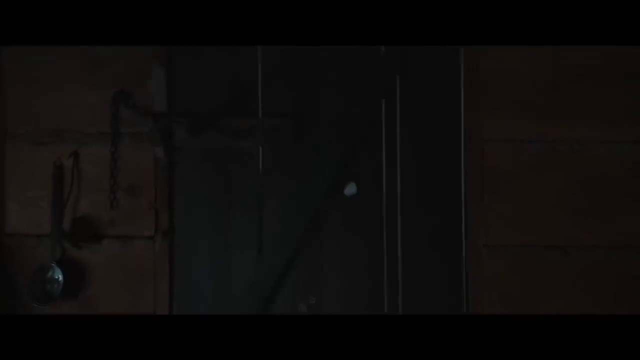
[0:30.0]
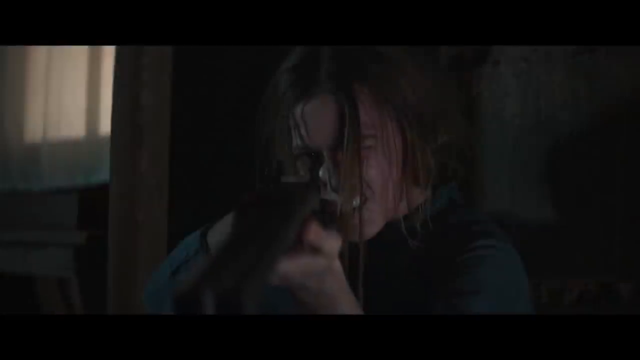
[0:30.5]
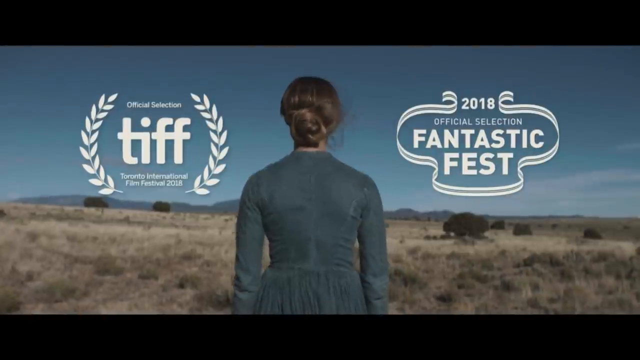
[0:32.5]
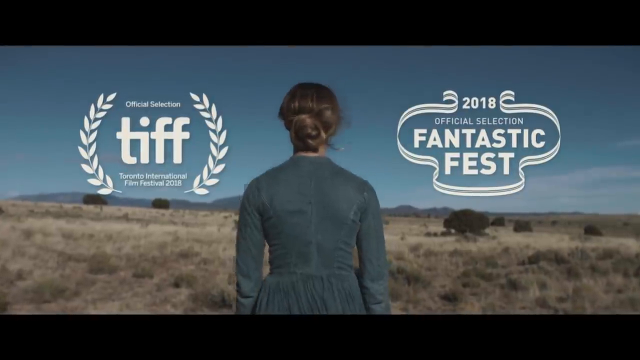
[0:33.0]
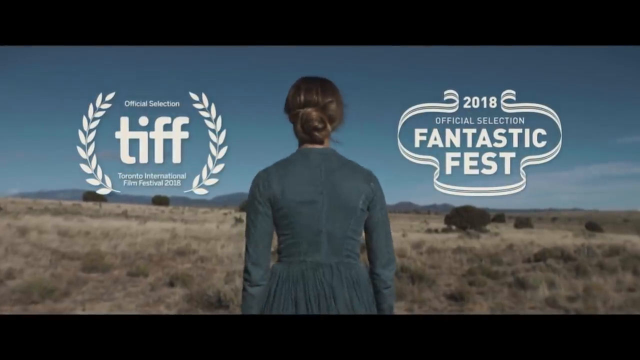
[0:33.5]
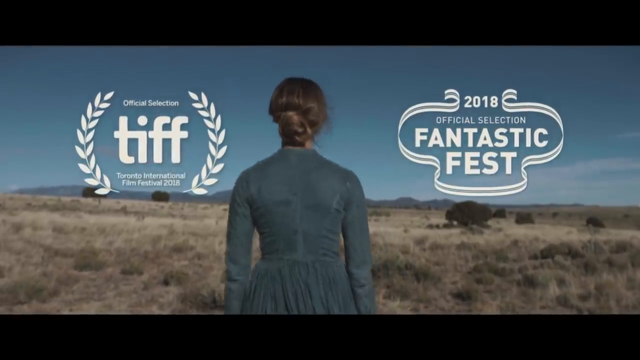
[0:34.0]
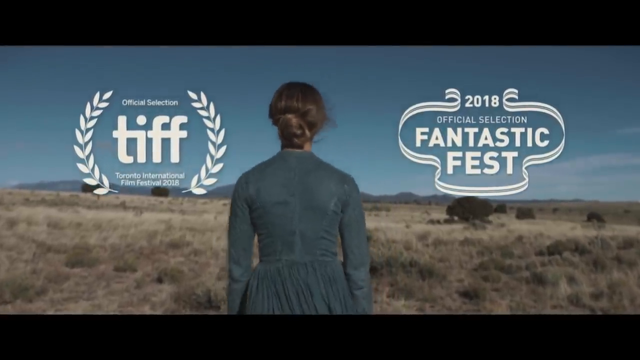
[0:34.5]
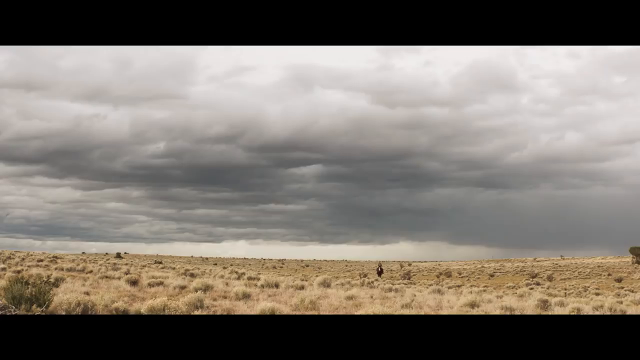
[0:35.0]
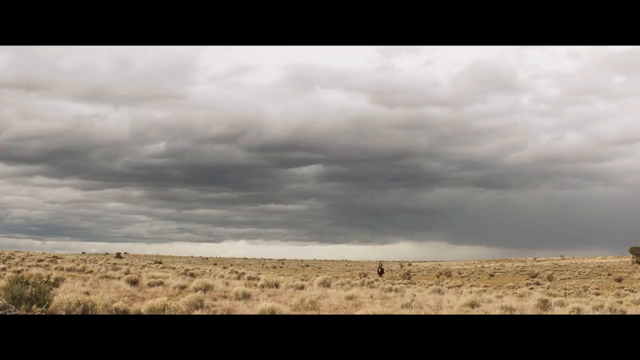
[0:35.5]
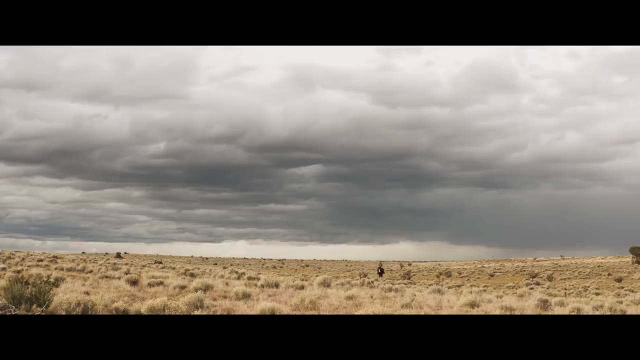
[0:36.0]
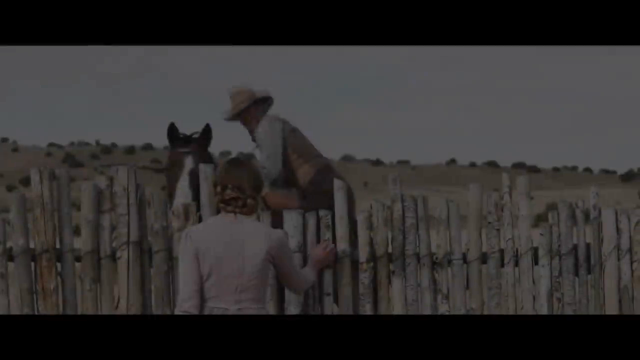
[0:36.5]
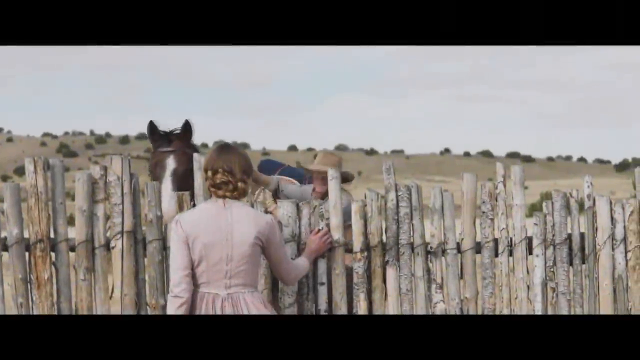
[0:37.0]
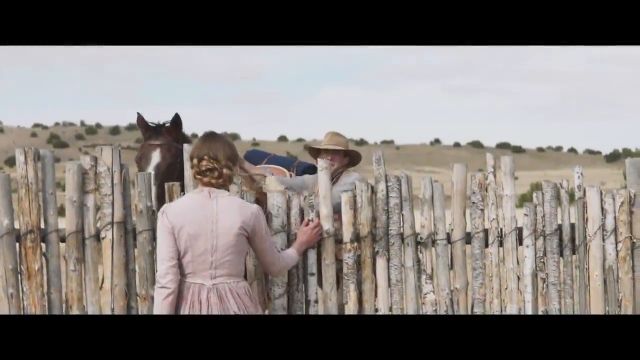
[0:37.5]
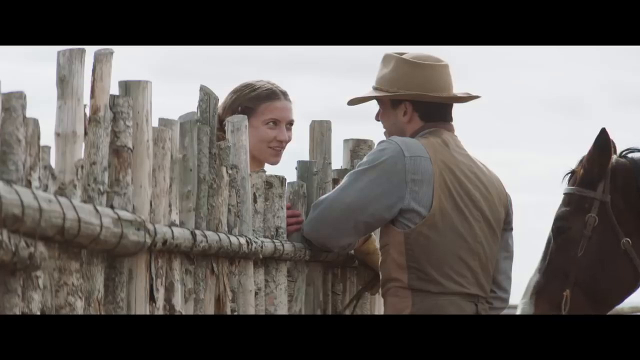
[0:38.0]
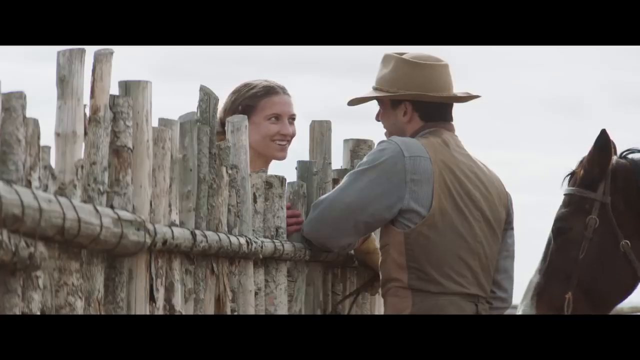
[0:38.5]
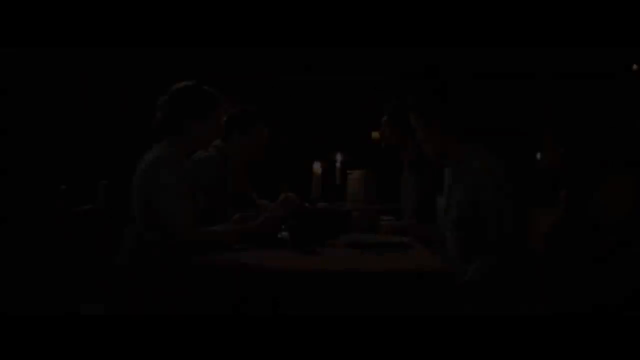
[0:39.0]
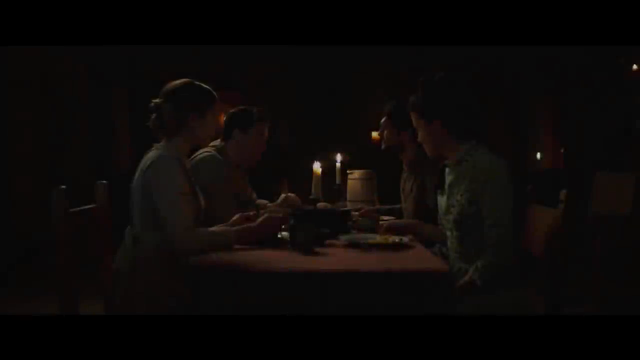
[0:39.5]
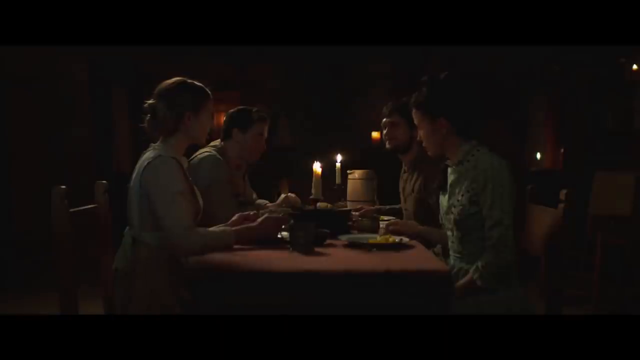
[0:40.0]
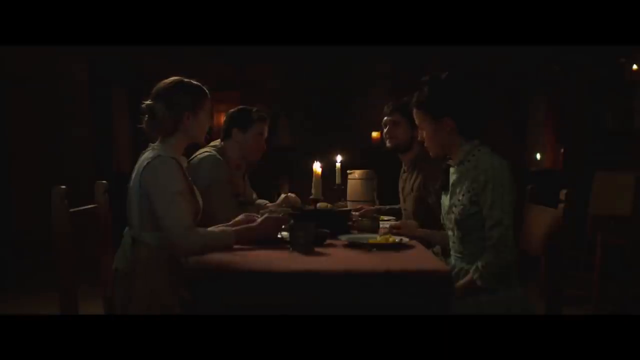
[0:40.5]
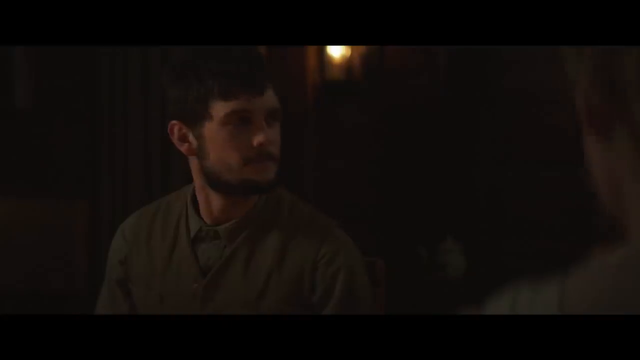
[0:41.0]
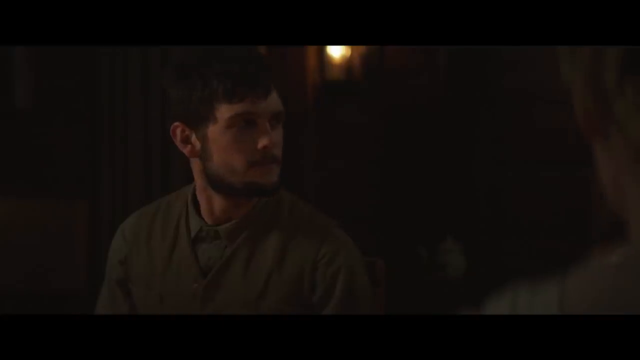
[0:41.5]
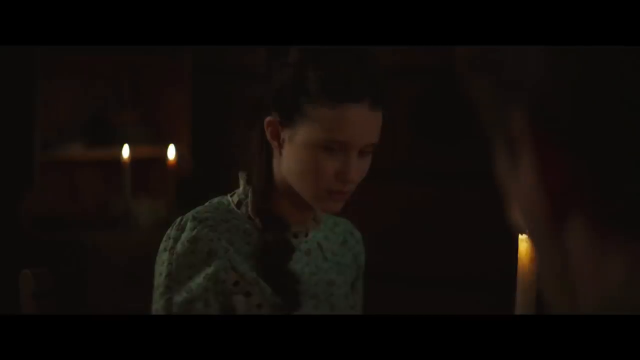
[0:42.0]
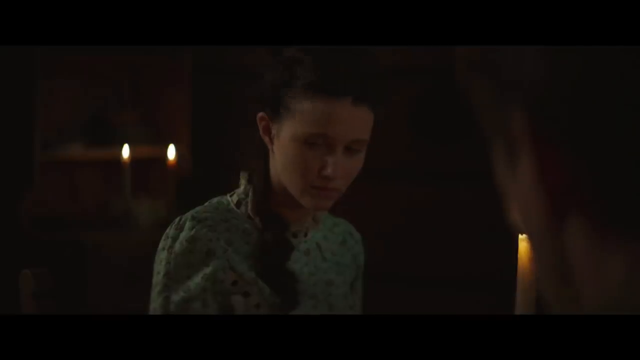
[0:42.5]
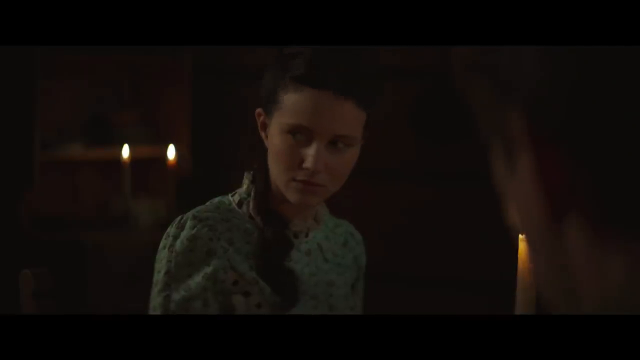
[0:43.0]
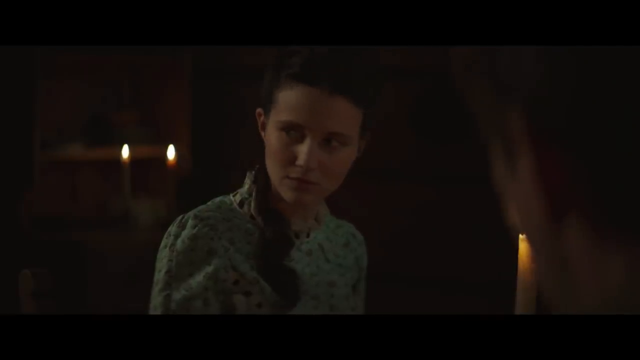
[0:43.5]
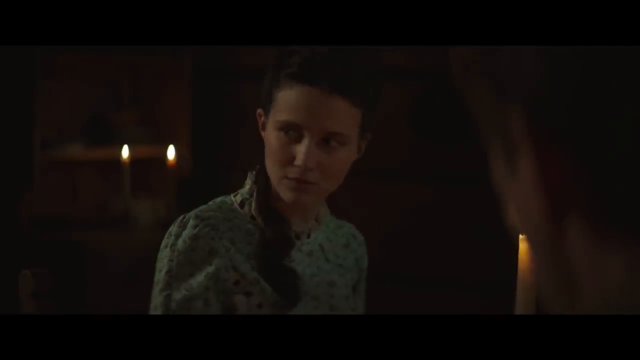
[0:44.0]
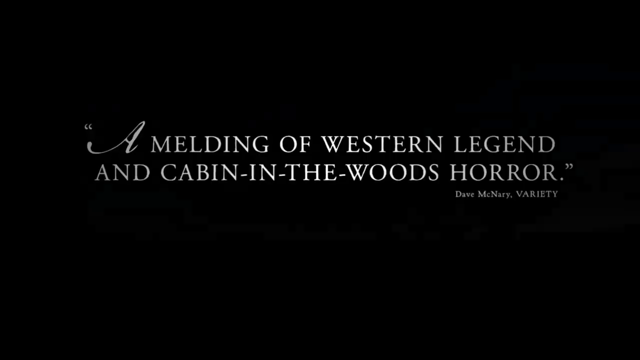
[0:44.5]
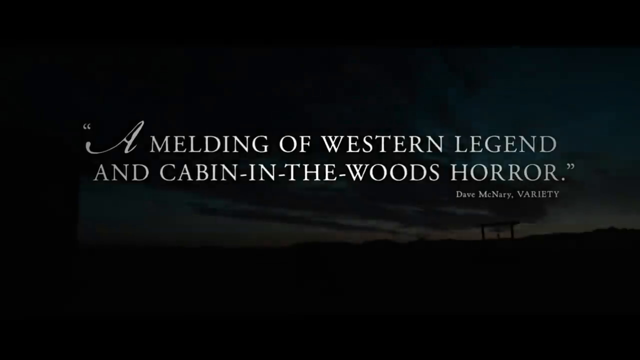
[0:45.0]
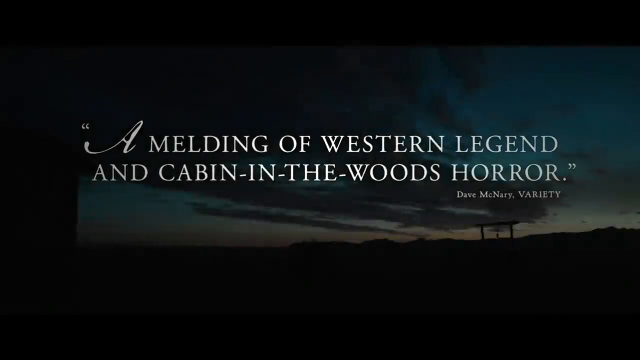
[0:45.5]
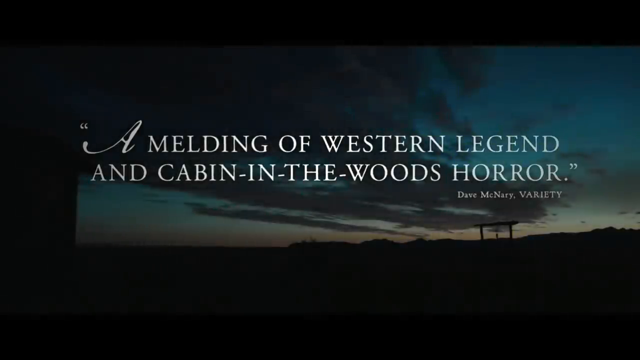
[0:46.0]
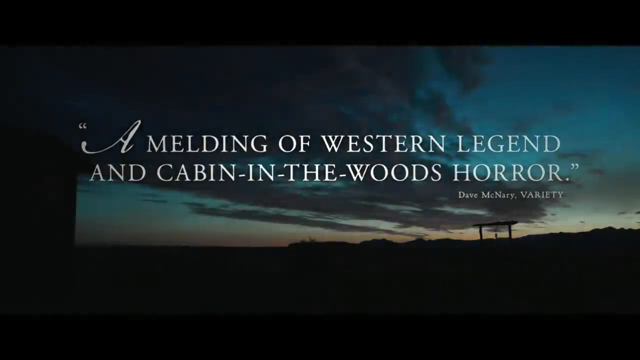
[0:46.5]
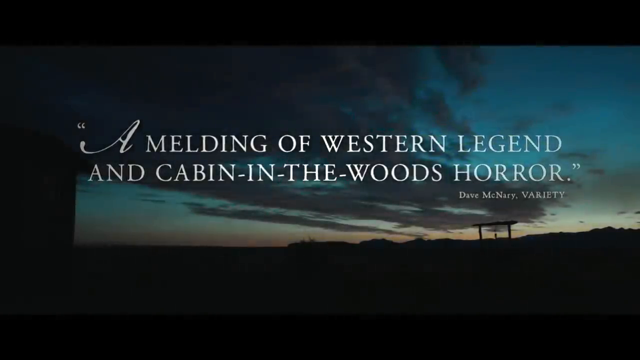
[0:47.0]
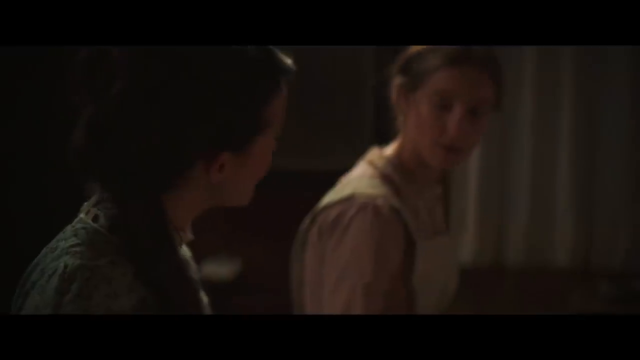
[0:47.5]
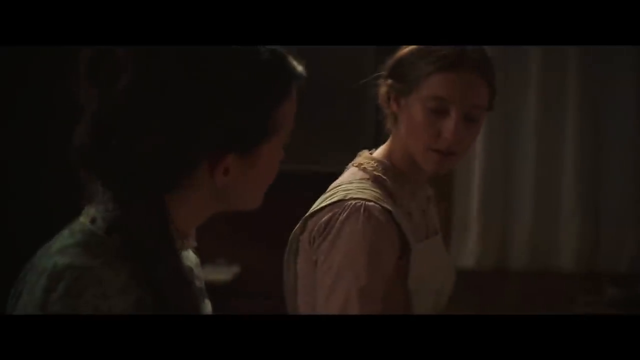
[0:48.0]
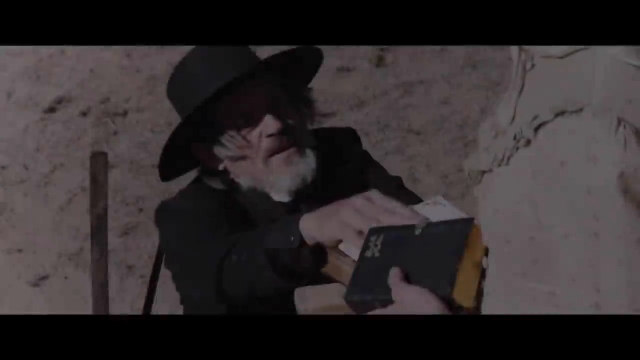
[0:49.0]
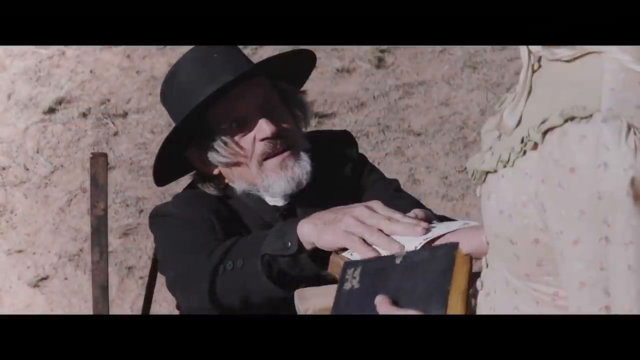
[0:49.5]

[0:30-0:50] The same young woman, in a somewhat dirty apron dress, points a gun, and it looks like the gun has gone off. She is then seen walking through the grass of a vast field in a bluish long-sleeved dress, her hair up in a bun, with hills in the far background and a blue sky with a tiny bit of cloud on the right. Text names an official selection of the Toronto International Film Festival, apparently 2018, and a 2018 official selection of Fantastic Fest. The woman continues walking, and the field is shown under a gray sky as the weather changes. She now wears what looks like a light pink or light purple dress and stands at a fence made of wood branches; a man, apparently in a cowboy hat, has just gotten off a horse on the other side of the fence. She talks to him through the fence, looking excited, and he looks happy to see her. In a darkened room inside, apparently a couple of people are having a meal; they look at each other as if someone maybe said something surprising. White text on a black screen reads "a melding of western legend and cabin in the woods horror," and after a fade from black, apparently the sun rises behind the text. The woman, in an apron and a dress, appears to be washing dishes or talking to another woman. A man who looks like the priest from earlier appears, wearing a black hat and a black outfit.